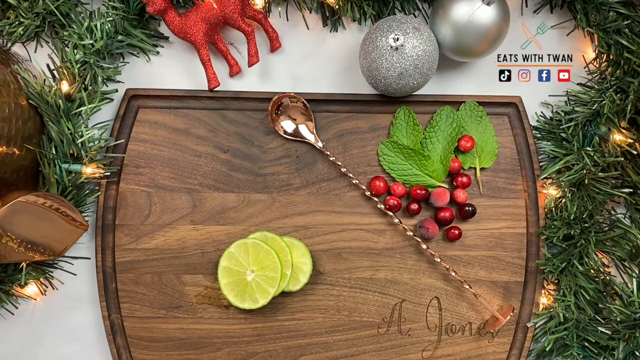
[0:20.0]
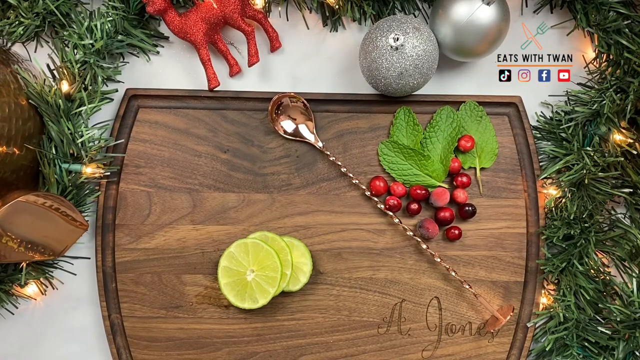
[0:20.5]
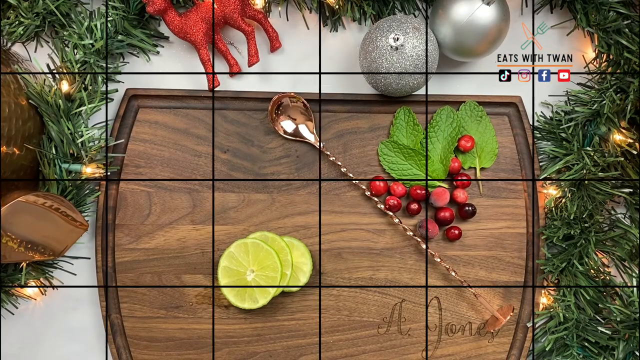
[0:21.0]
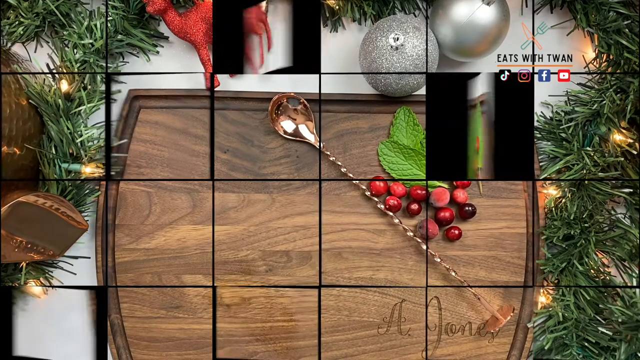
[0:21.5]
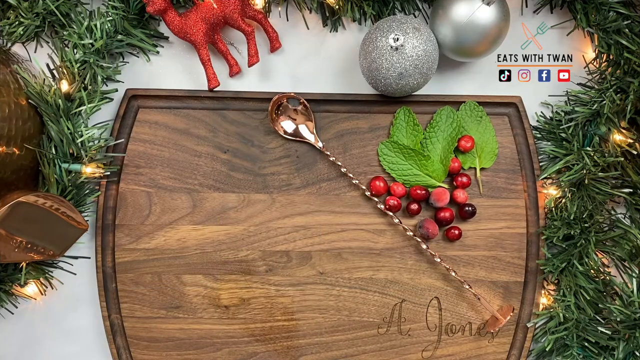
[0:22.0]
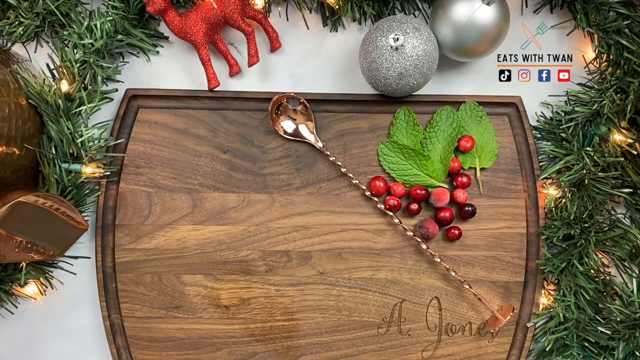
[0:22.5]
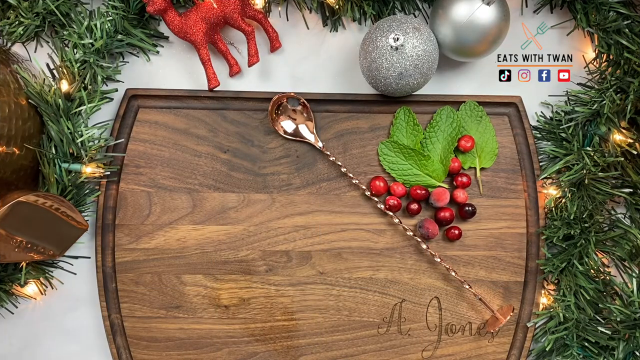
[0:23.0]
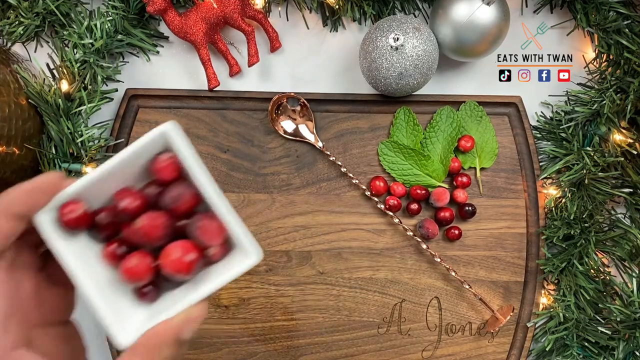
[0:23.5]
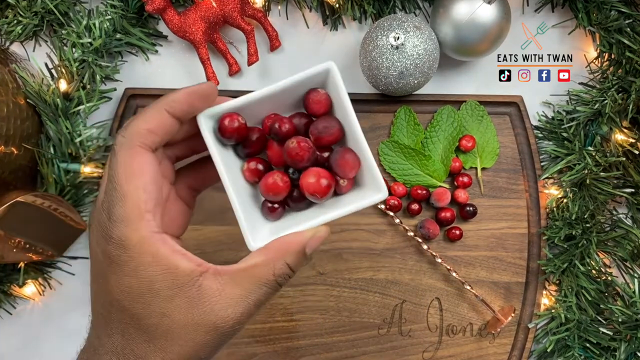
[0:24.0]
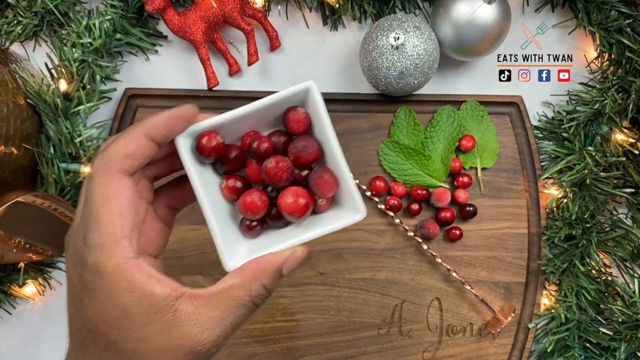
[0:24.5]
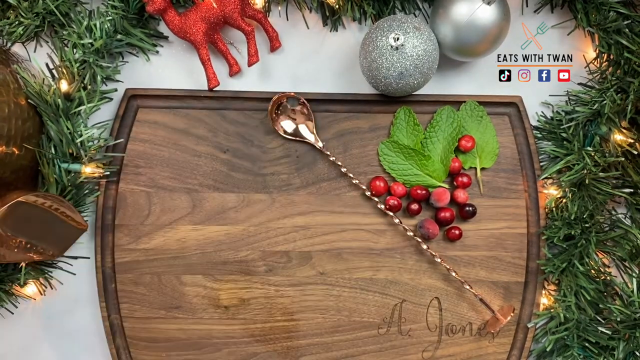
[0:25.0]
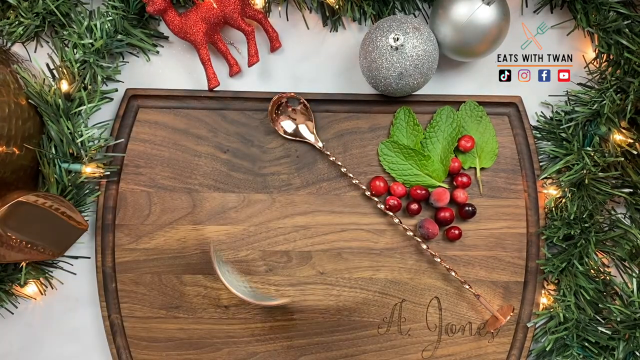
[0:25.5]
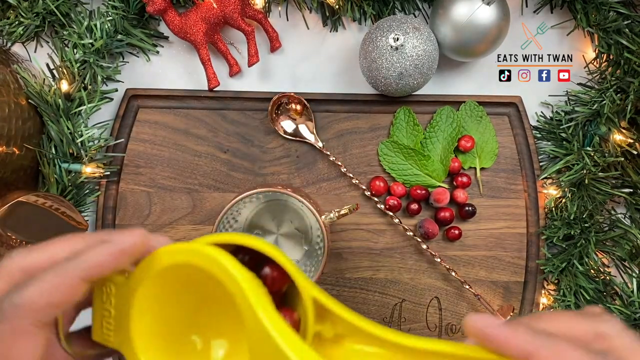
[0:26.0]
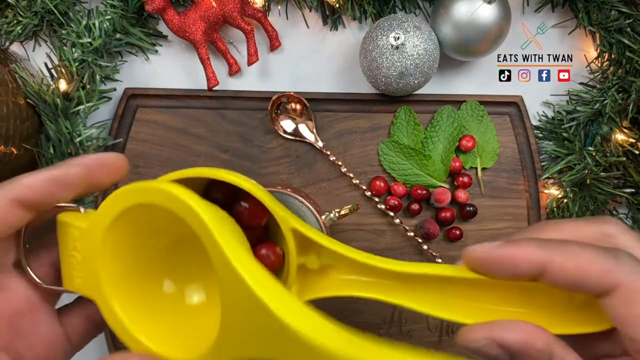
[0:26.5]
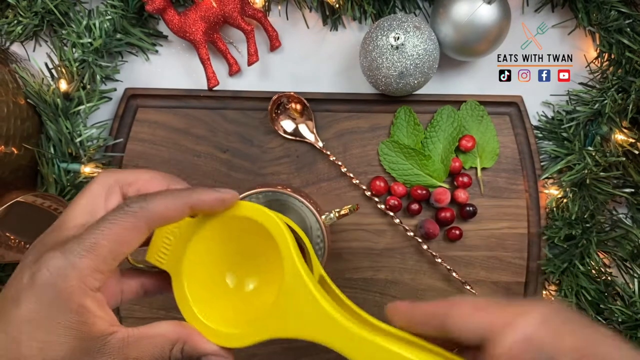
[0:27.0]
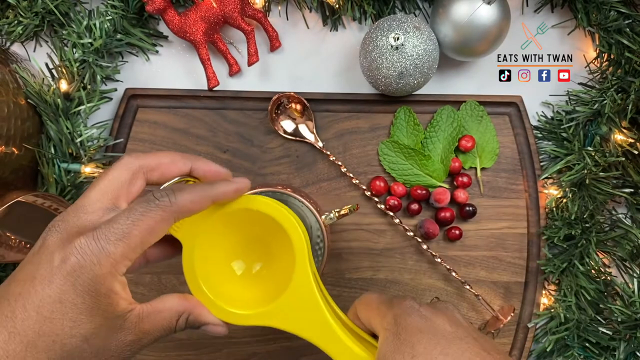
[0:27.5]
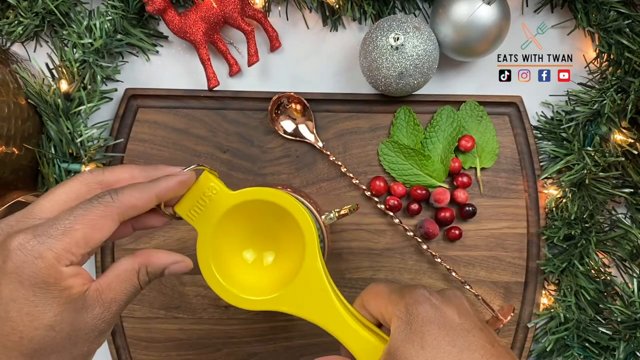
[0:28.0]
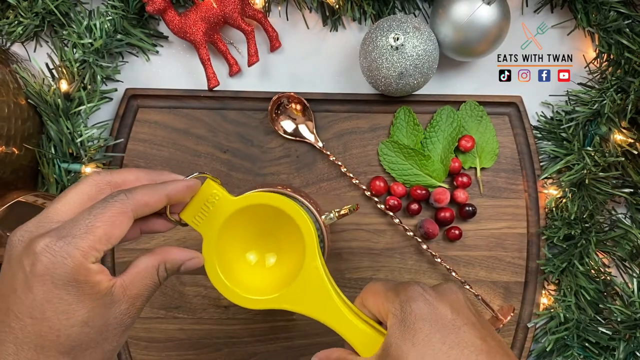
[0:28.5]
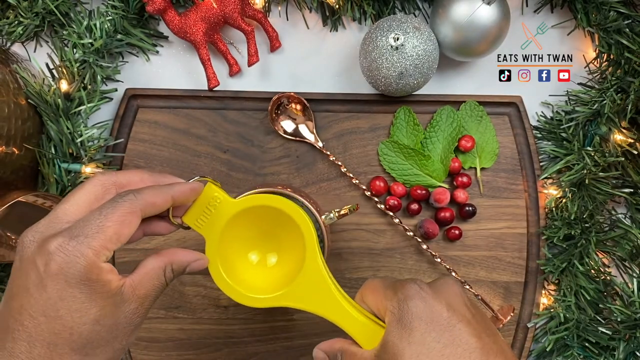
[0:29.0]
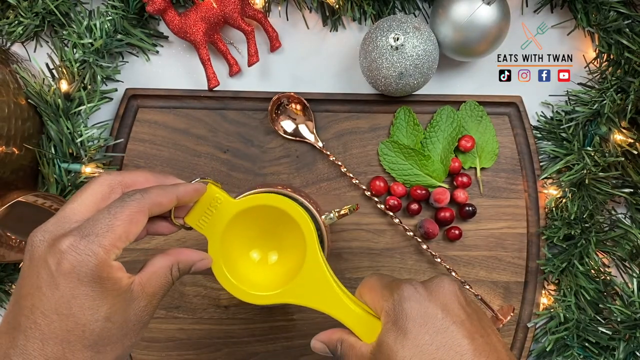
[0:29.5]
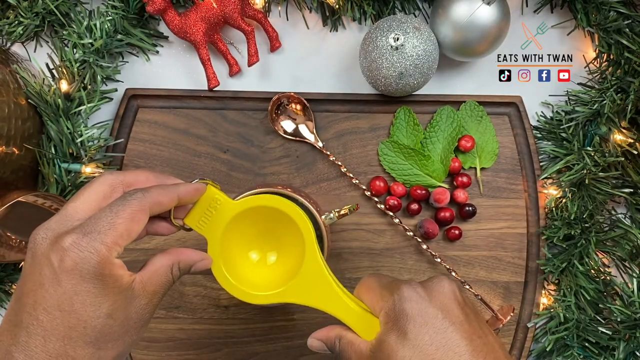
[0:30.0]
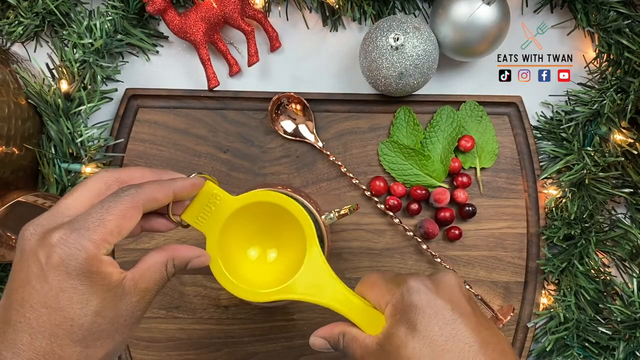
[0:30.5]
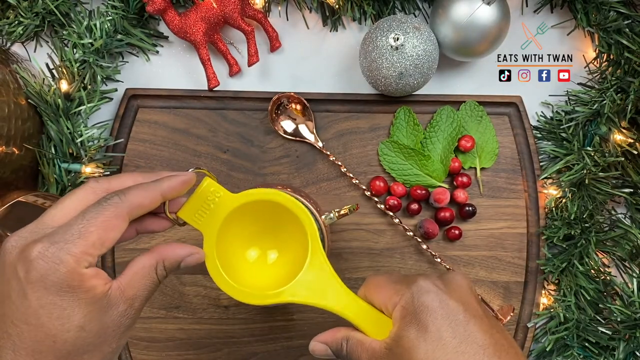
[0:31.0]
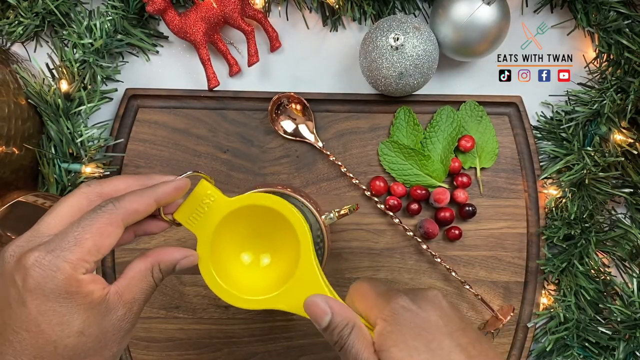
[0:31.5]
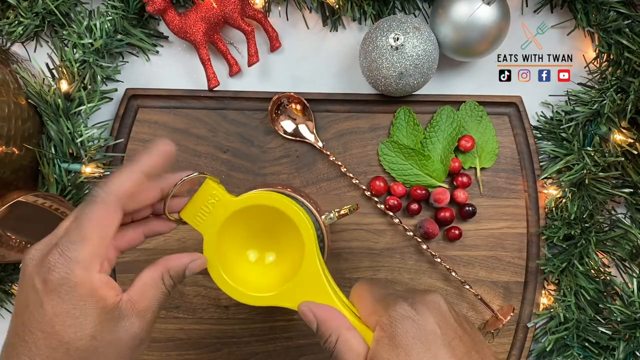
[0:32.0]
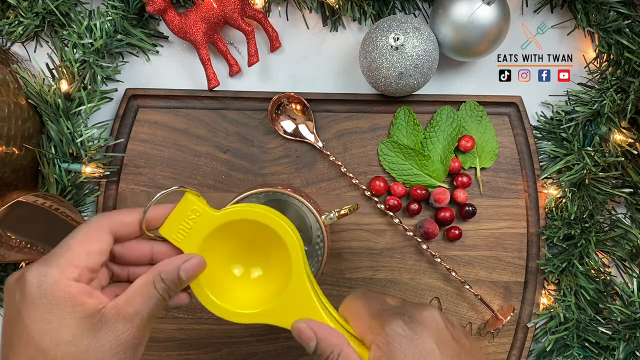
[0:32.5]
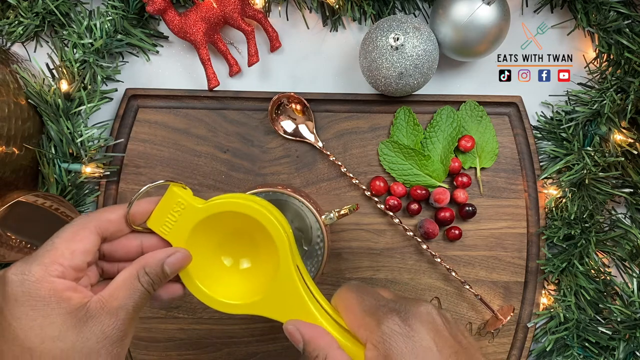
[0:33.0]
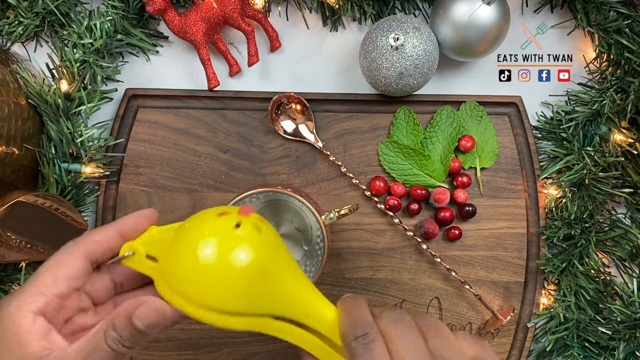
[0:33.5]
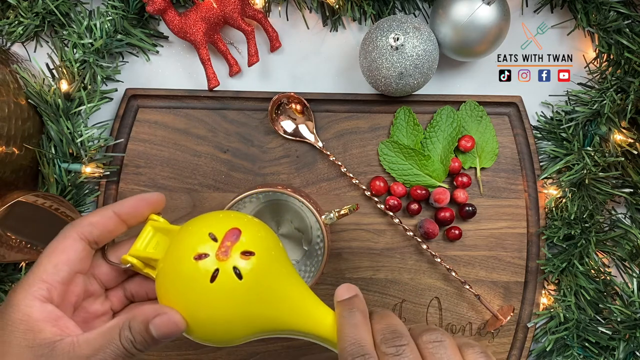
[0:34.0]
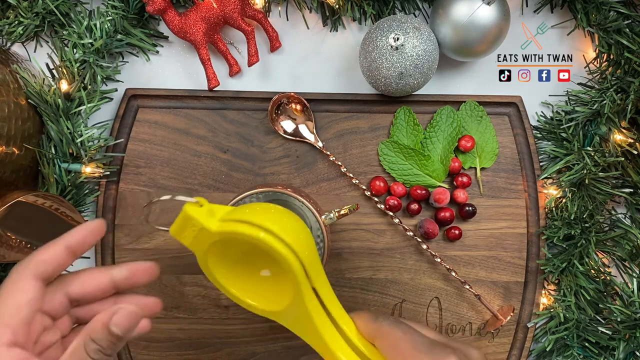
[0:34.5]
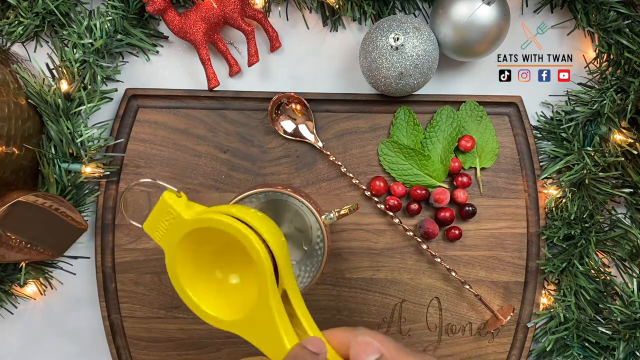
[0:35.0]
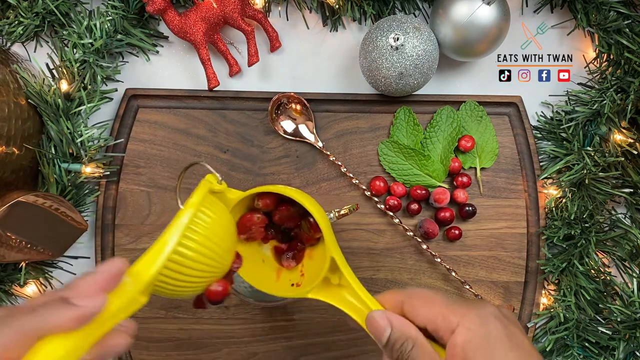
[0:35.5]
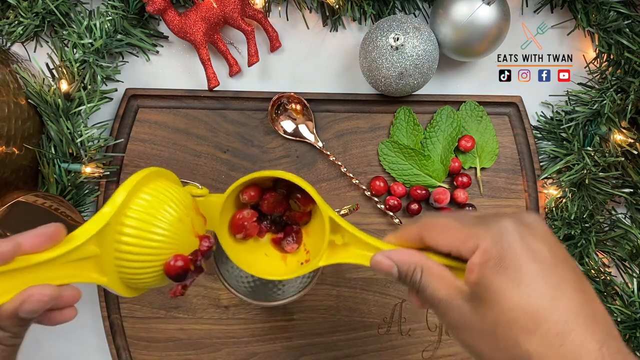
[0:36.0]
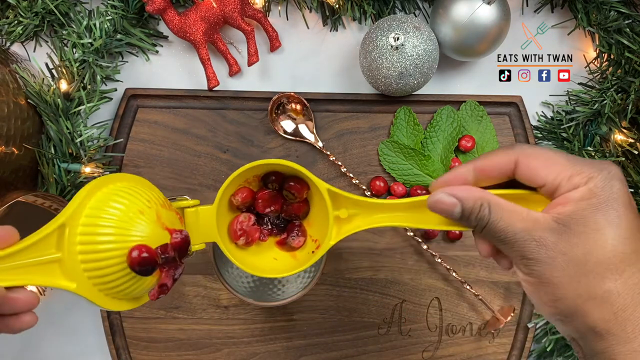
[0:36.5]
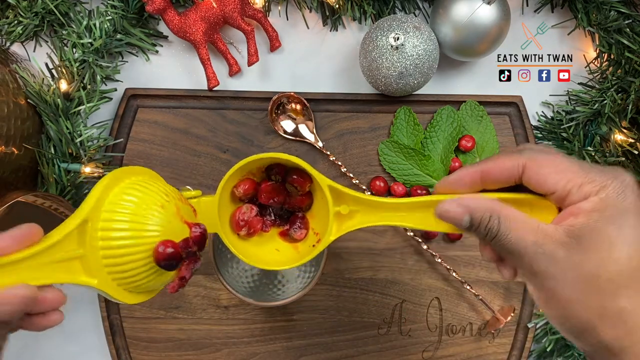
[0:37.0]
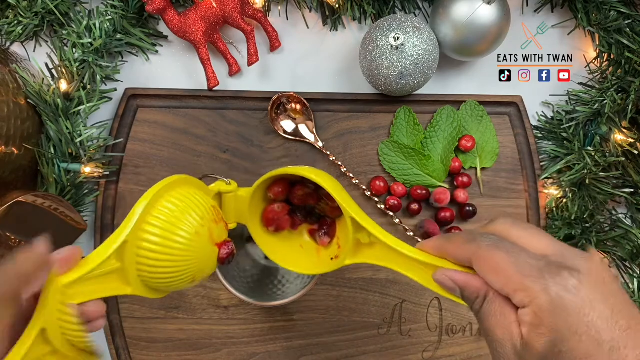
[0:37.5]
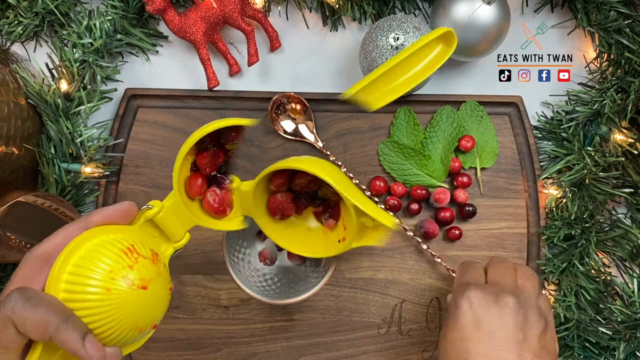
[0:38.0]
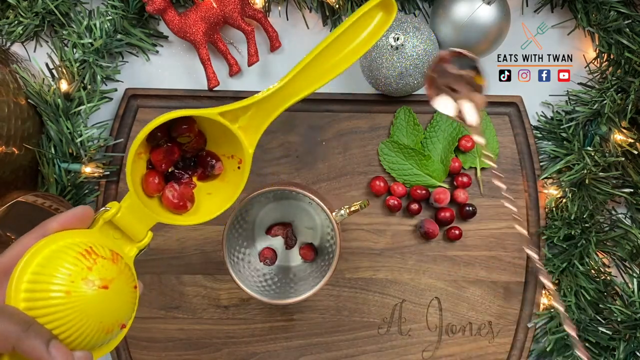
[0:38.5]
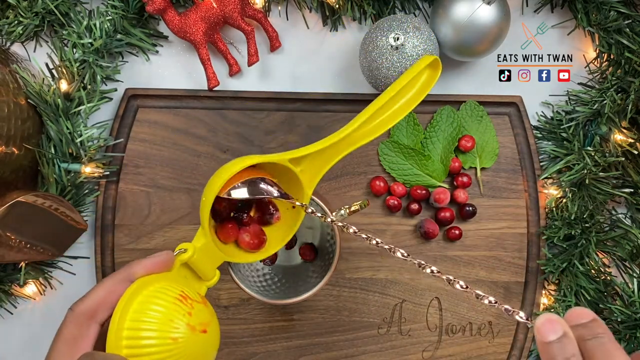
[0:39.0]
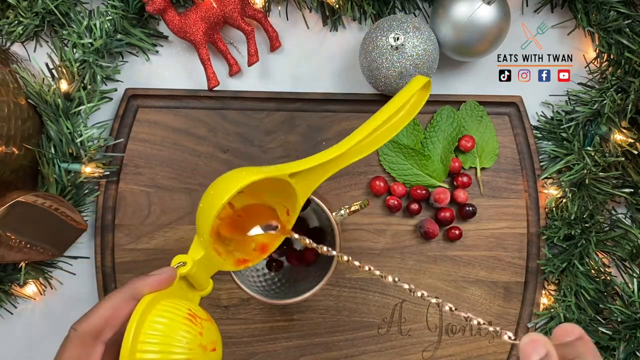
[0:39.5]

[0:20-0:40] The top view of the cutting board continues, with pomegranates and leaves on it and the person's hands in view. There appears to be a small white container holding a bunch of pomegranates. The shot transitions to a bowl on the cutting board, and the person holds a yellow squeezer, squeezing the pomegranates into the bowl. He then uses a spoon to scoop the rest of them out of the yellow squeezer into the bowl. The brown wooden cutting board has pomegranates and leaves on the side, a big spoon going across it, and Christmas decorations all around its edges, including two silver Christmas tree ornaments at the top. In the top right, the title "Eat Swift Juan" appears along with the TikTok, Instagram, Facebook and YouTube logos.